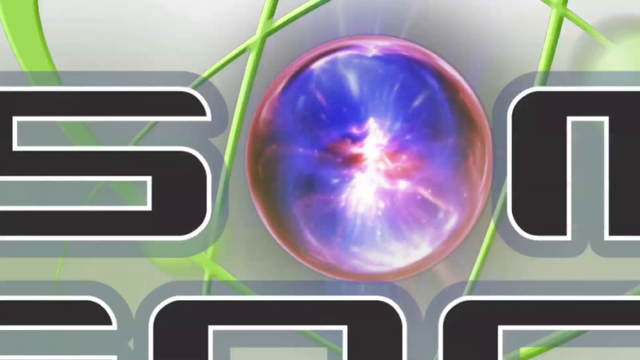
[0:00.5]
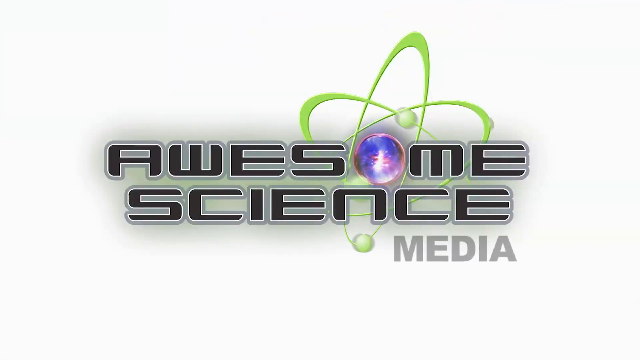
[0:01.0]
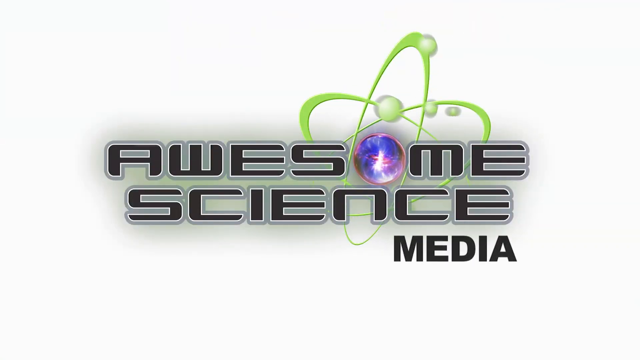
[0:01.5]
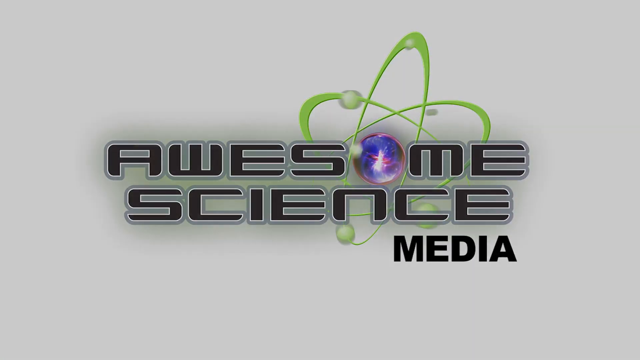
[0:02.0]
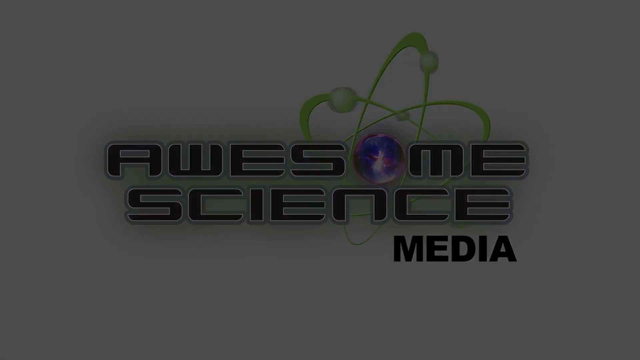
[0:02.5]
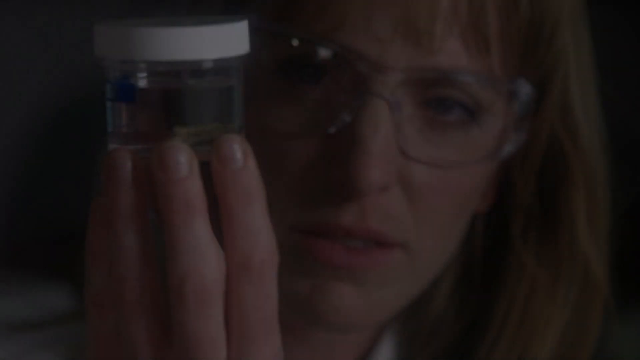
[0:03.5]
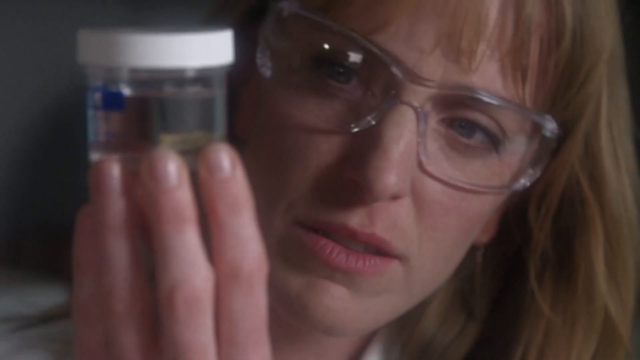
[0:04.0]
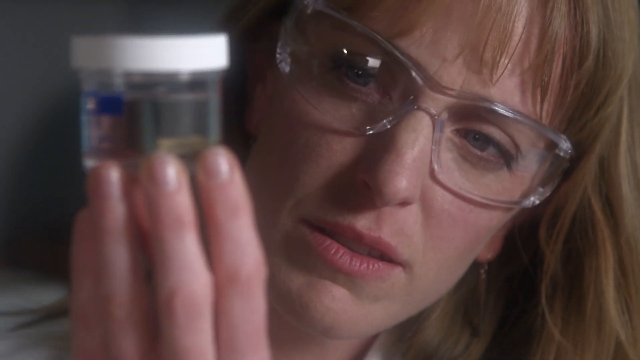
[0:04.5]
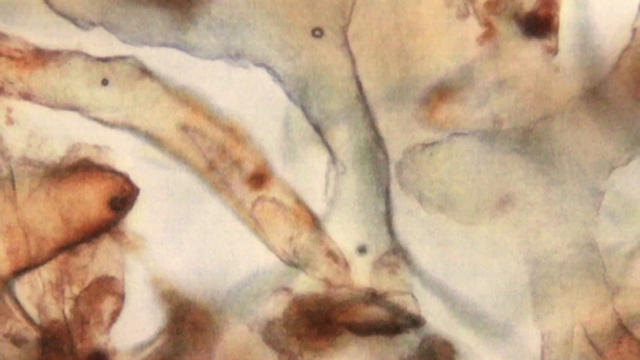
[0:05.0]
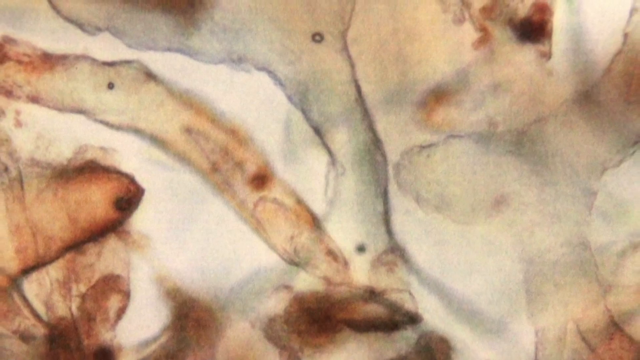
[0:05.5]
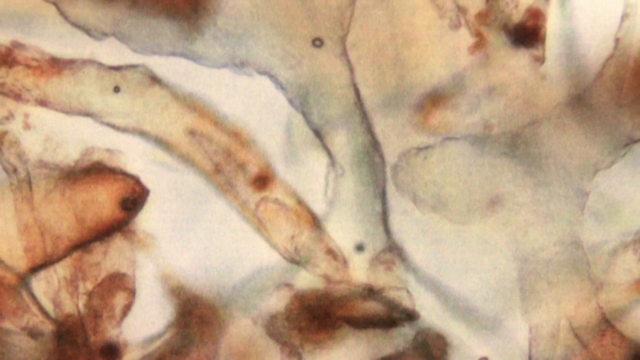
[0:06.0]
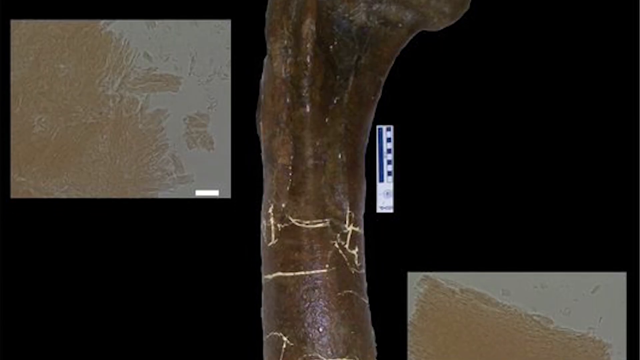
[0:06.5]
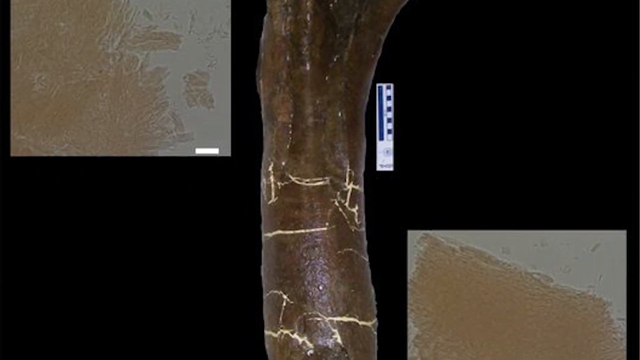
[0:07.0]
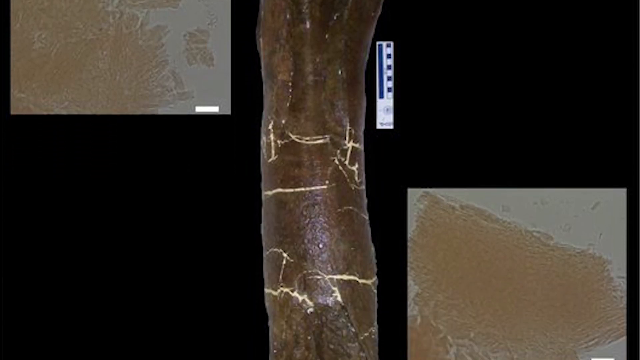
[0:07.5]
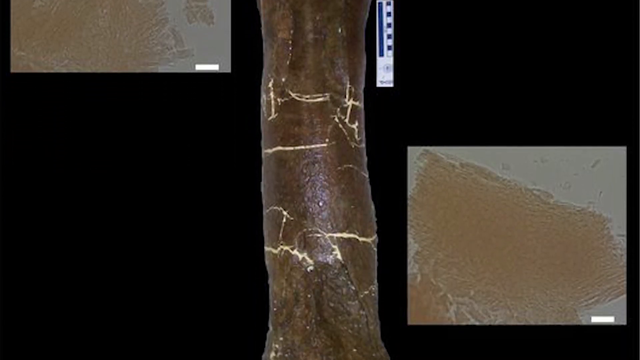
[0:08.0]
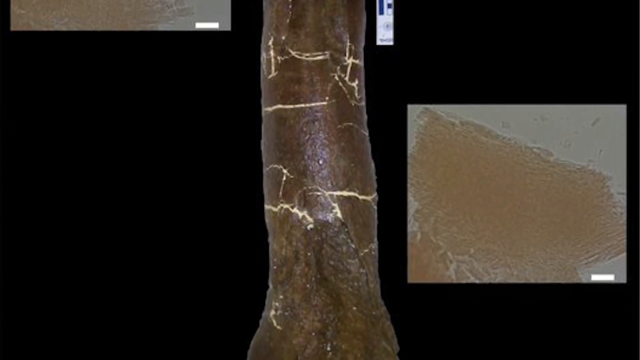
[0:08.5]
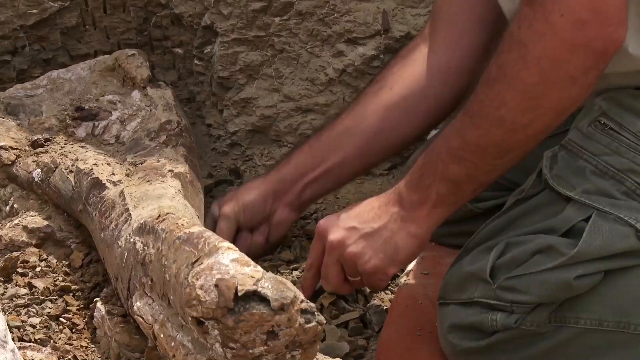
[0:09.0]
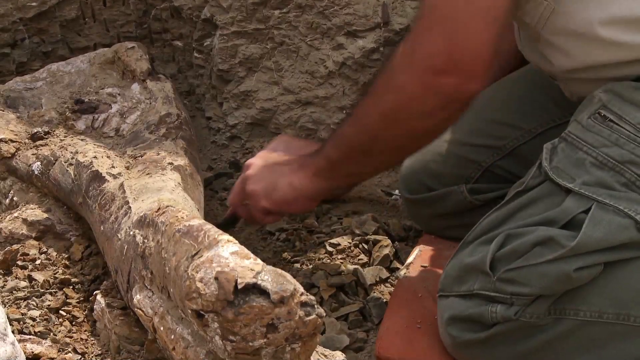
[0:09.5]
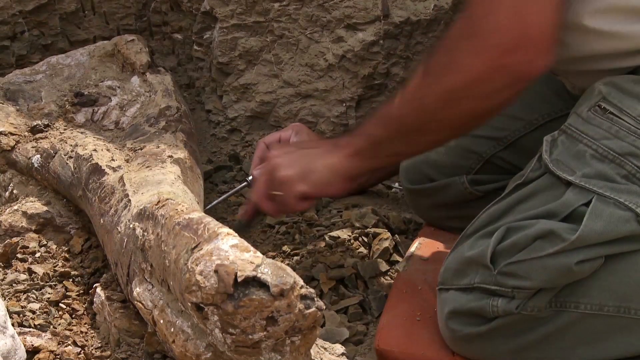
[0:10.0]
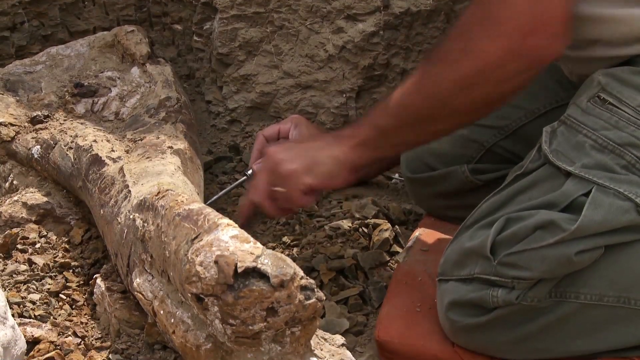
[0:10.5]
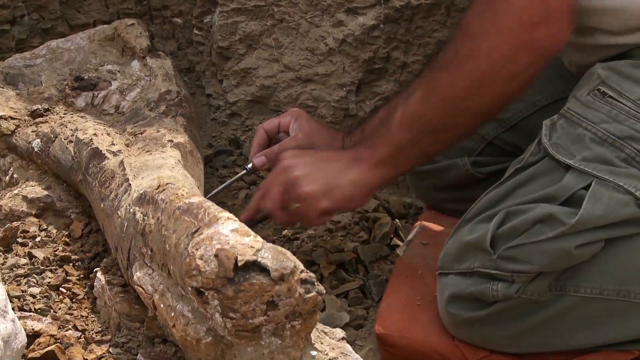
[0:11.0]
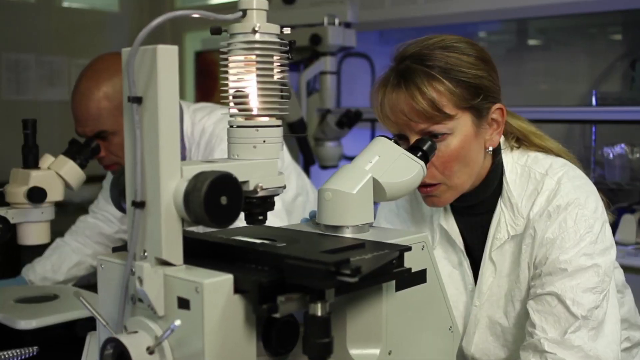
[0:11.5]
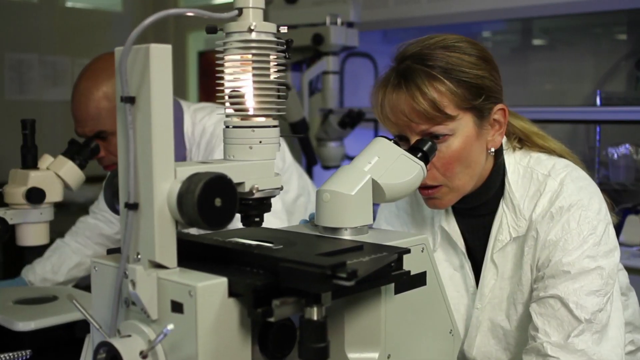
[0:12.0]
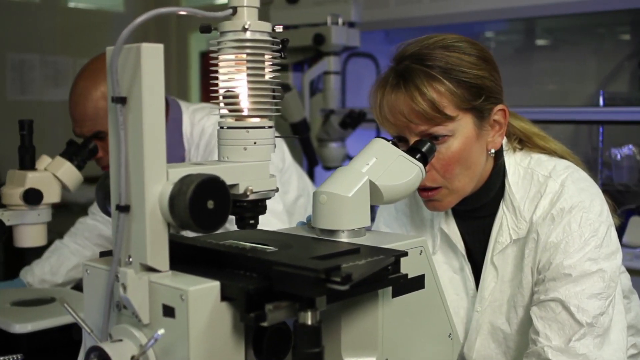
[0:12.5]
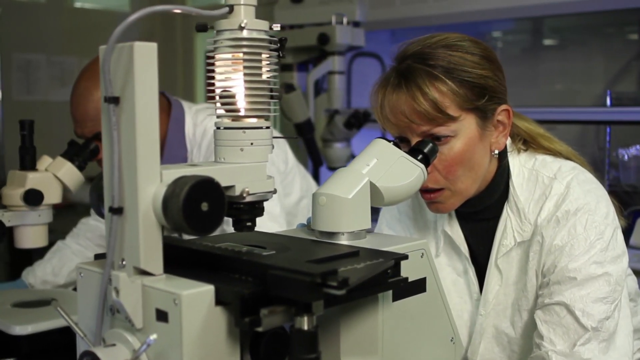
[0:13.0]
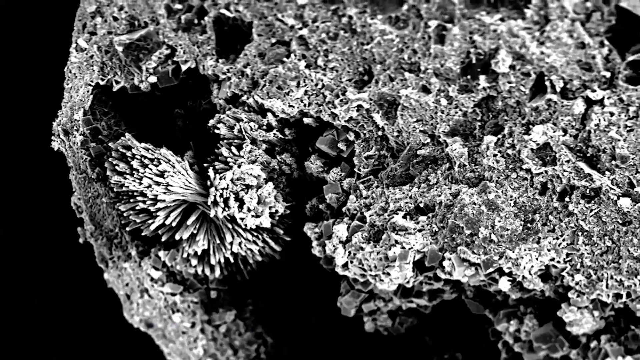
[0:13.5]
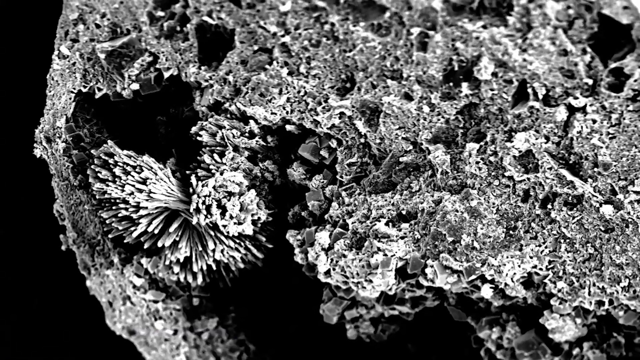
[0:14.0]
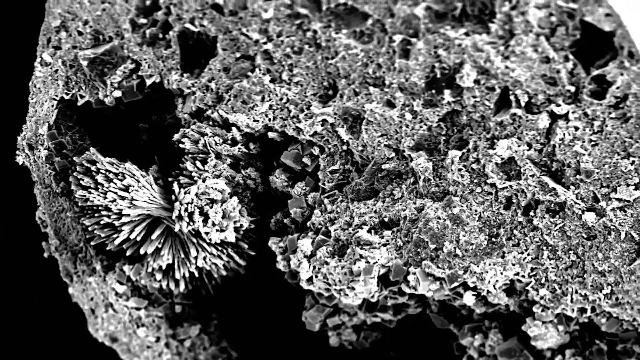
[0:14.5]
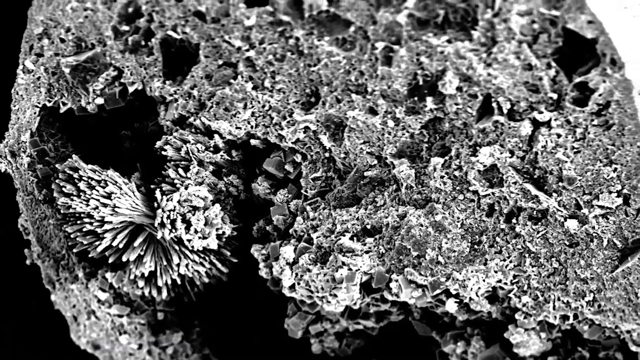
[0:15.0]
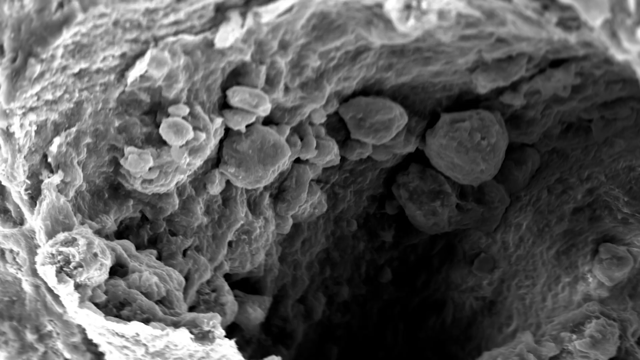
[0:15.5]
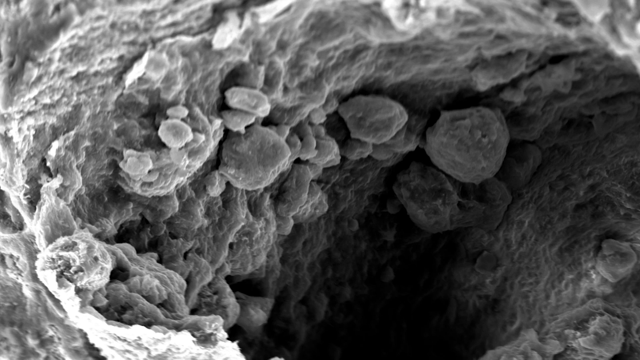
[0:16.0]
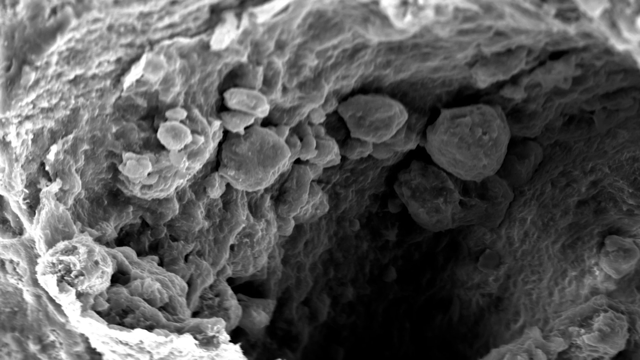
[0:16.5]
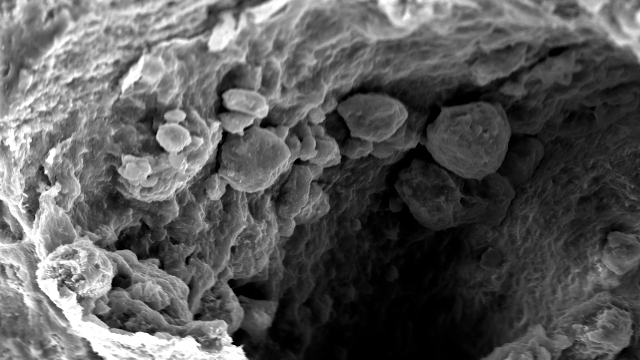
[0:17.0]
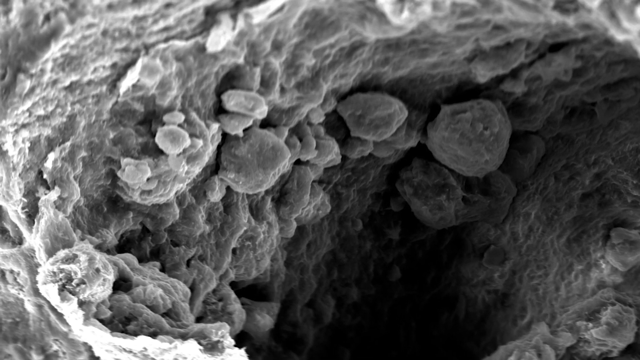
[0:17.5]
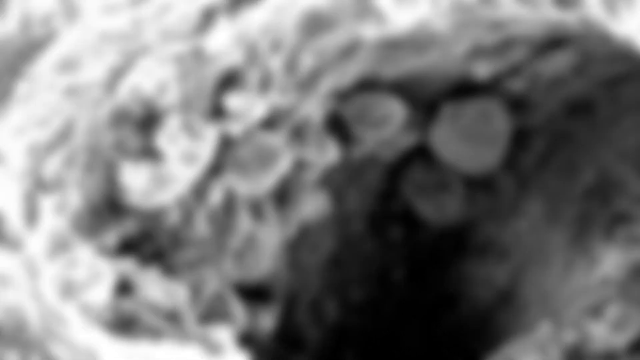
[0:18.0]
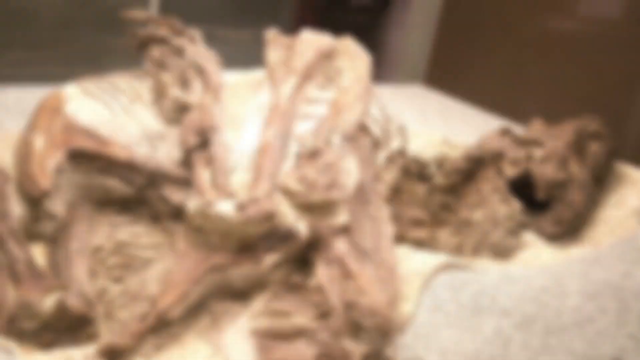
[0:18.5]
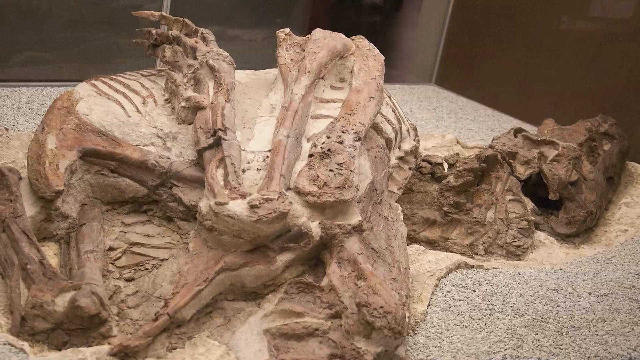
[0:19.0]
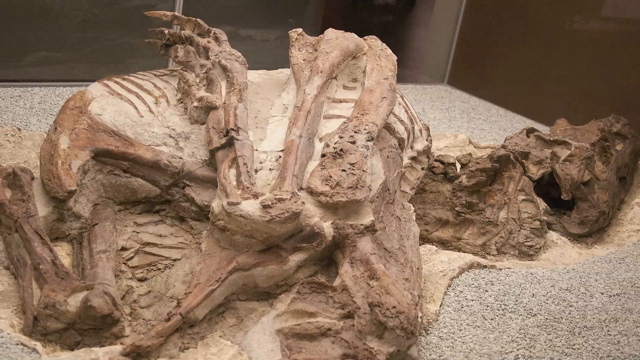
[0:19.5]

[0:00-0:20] A title card reads "Awesome Science Media," with the O in Awesome stylized to look like an atom. A series of short video clips and photographs of people in scientific settings follows. First, a woman wearing goggles holds a small jar with a clear liquid in it, tilting her head as if inspecting it while she slightly turns it in her fingers. Close-ups follow of what look like x-ray views of bones or fossils. A person, seen from the shoulders down, kneels in the dirt, cleaning away dirt from what looks like a large fossil. In a laboratory, two people look through powerful microscopes: a man on the left and a woman on the right, both in white lab coats. The woman has her hair pulled back in a ponytail and wears a black sweater under her lab coat. A series of what look like microscopic images follows; they look like the surfaces of fossils and are grainy, resembling white swirls with tiny white dots all over them. Finally there is what looks like a table containing fossilized remains of some type of creature.